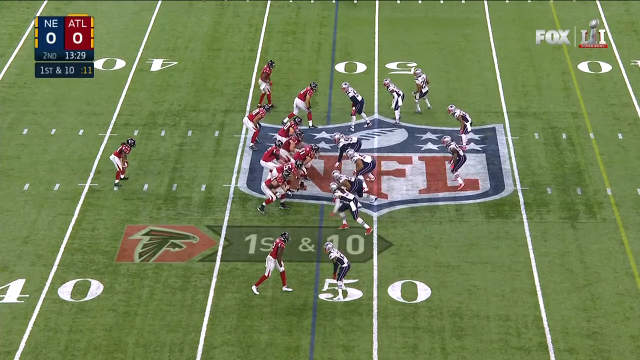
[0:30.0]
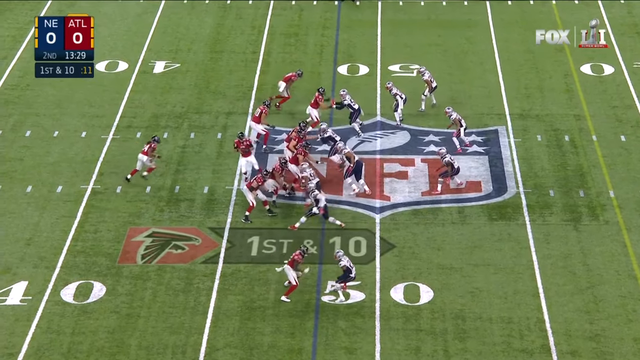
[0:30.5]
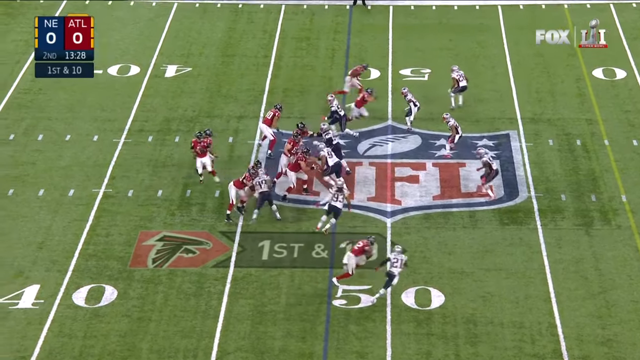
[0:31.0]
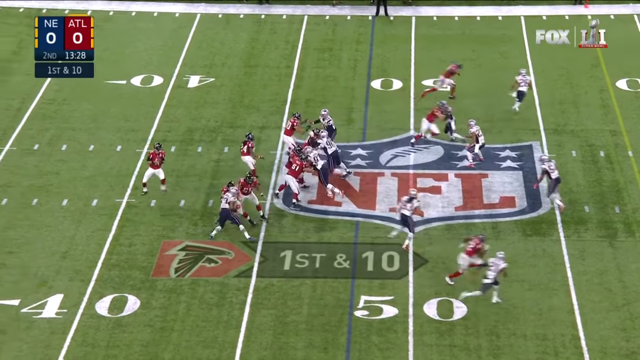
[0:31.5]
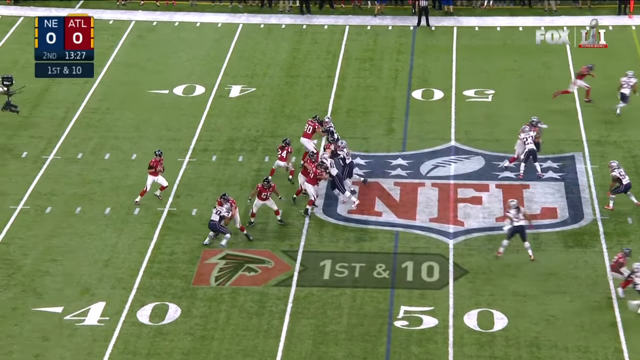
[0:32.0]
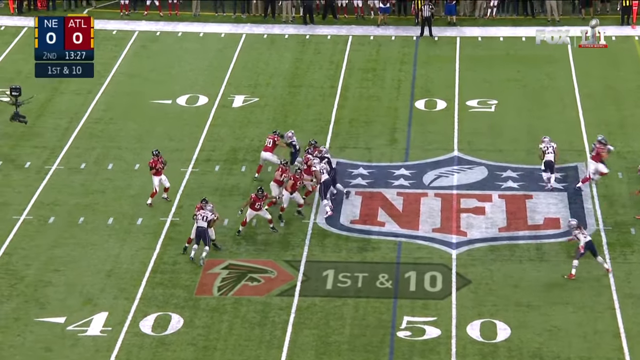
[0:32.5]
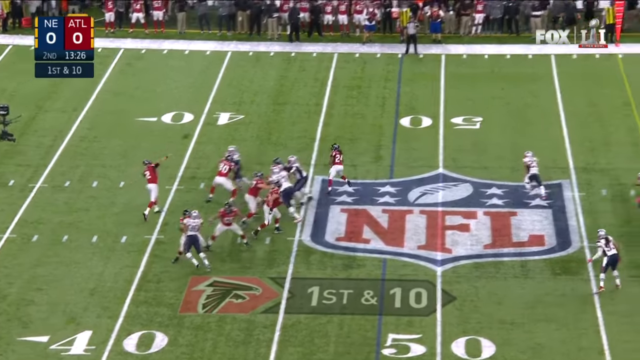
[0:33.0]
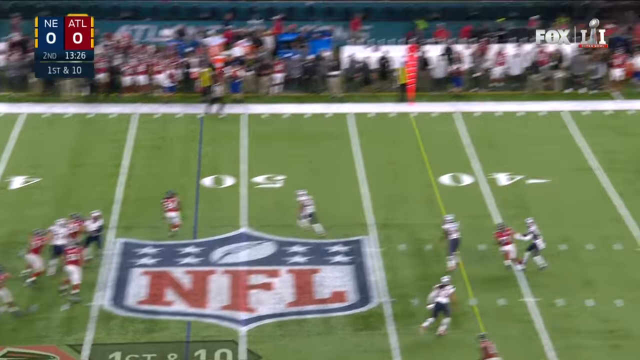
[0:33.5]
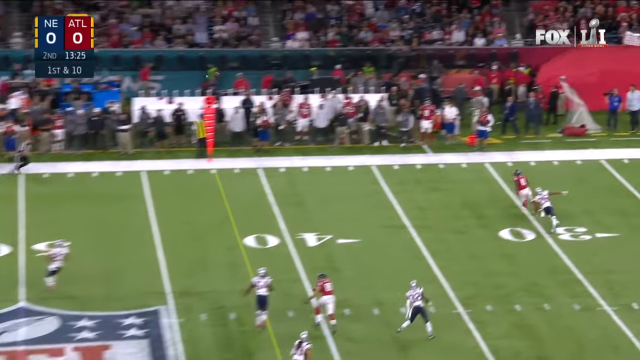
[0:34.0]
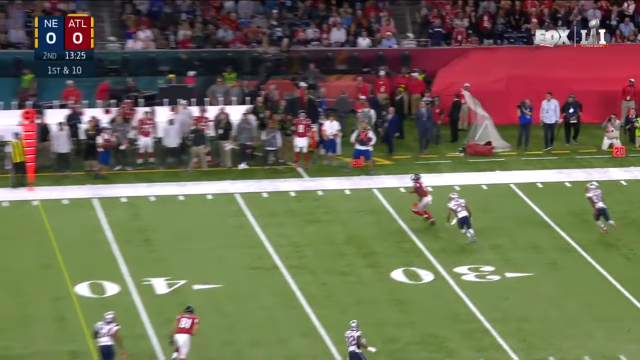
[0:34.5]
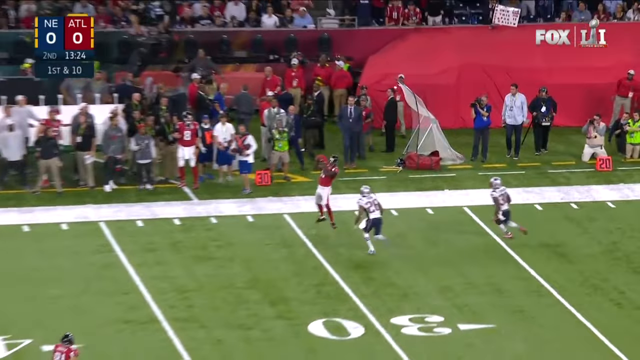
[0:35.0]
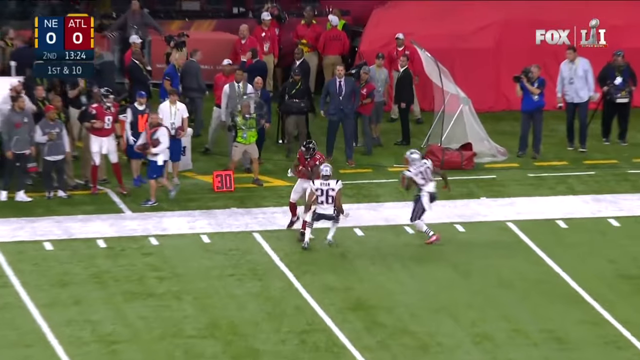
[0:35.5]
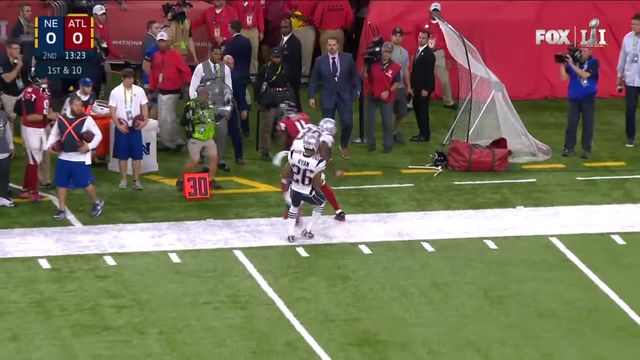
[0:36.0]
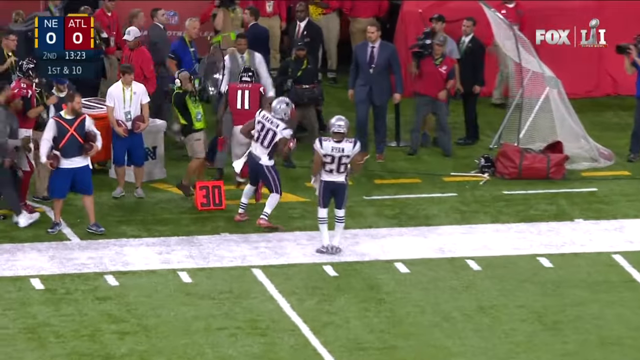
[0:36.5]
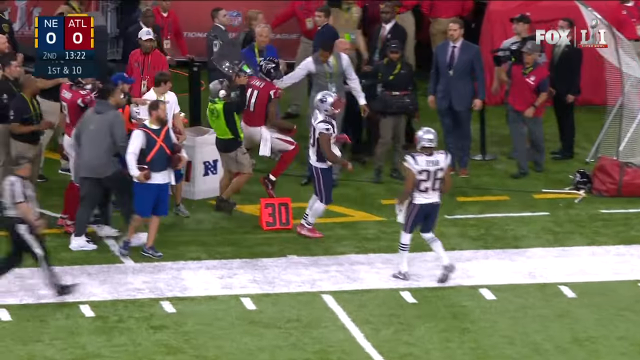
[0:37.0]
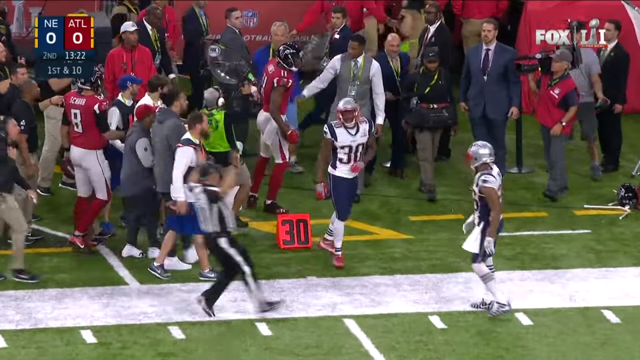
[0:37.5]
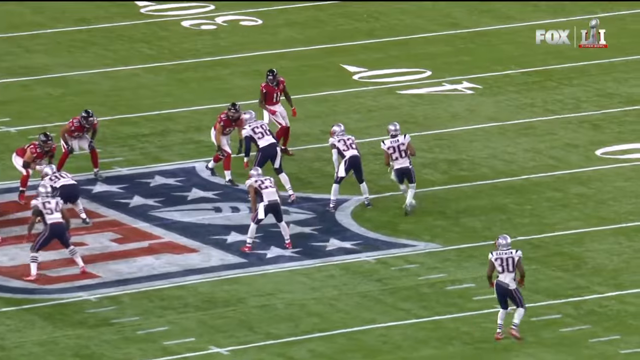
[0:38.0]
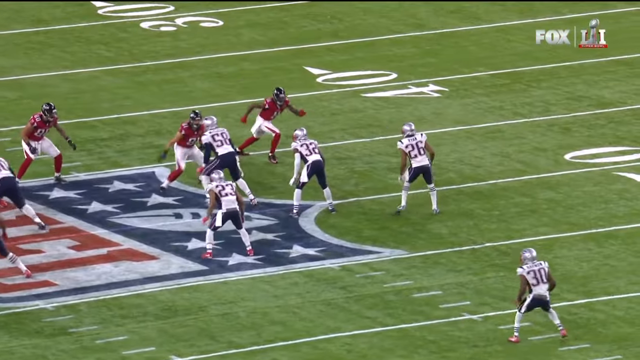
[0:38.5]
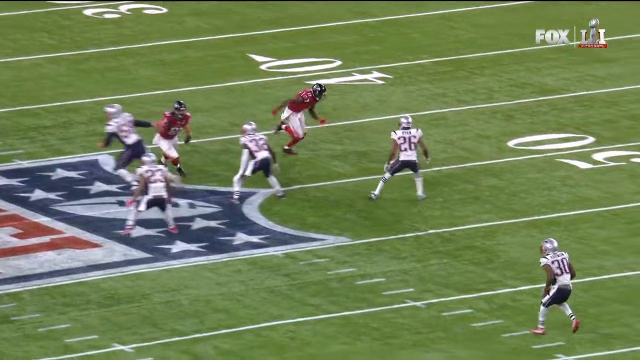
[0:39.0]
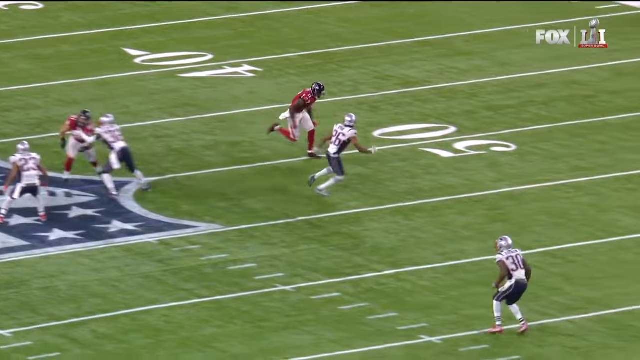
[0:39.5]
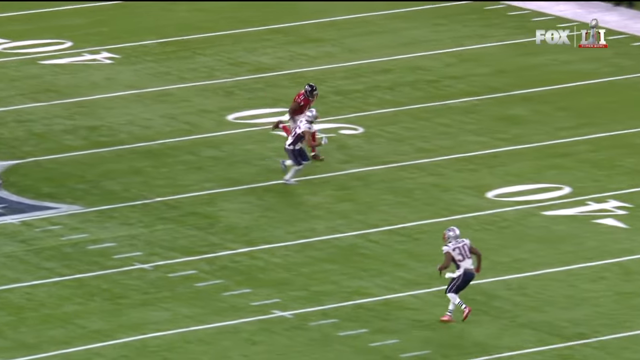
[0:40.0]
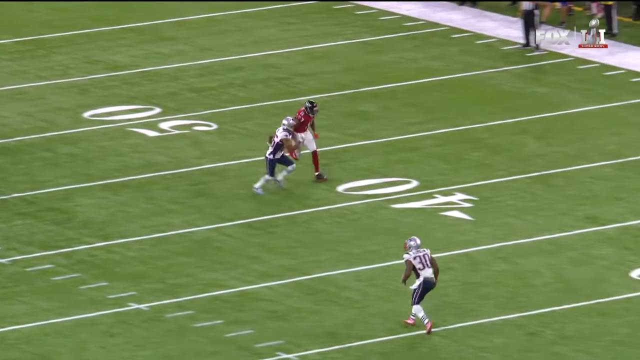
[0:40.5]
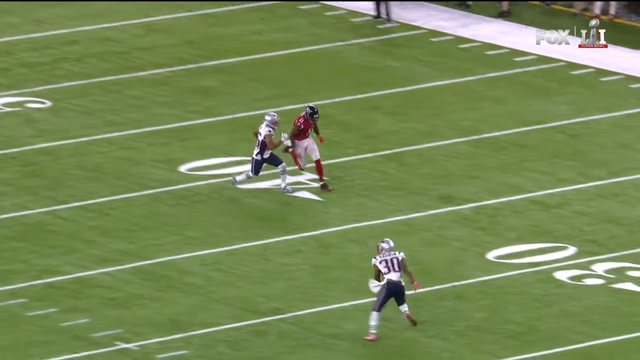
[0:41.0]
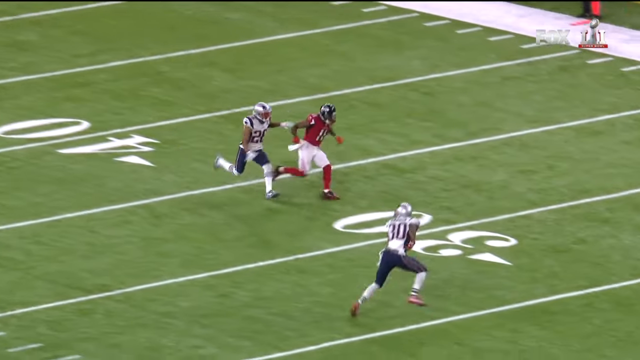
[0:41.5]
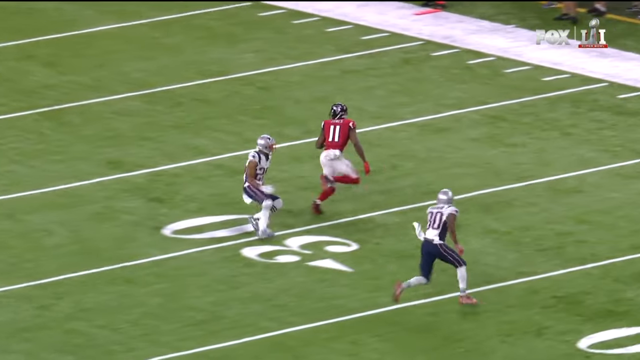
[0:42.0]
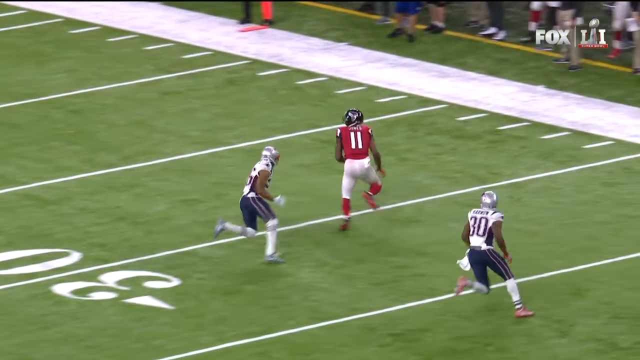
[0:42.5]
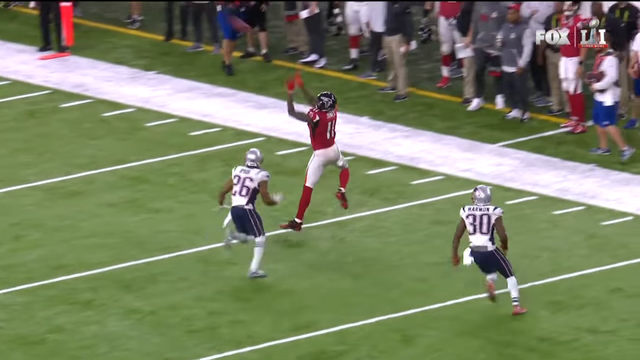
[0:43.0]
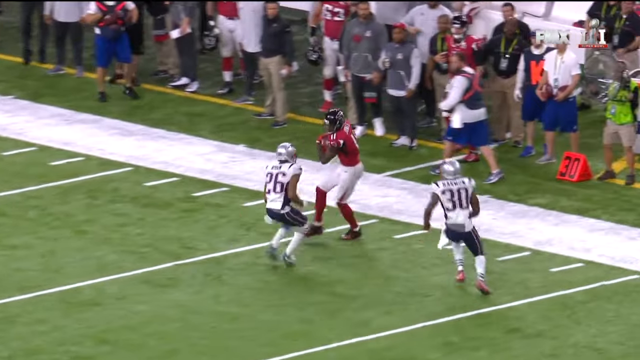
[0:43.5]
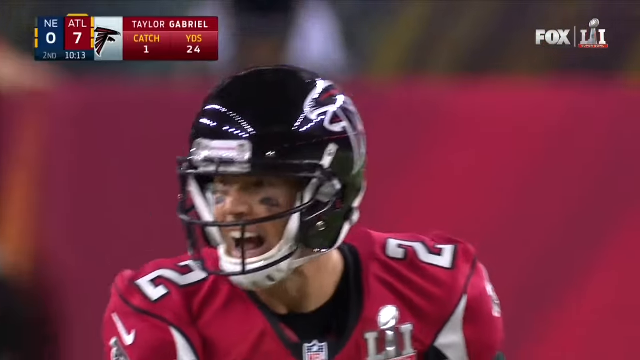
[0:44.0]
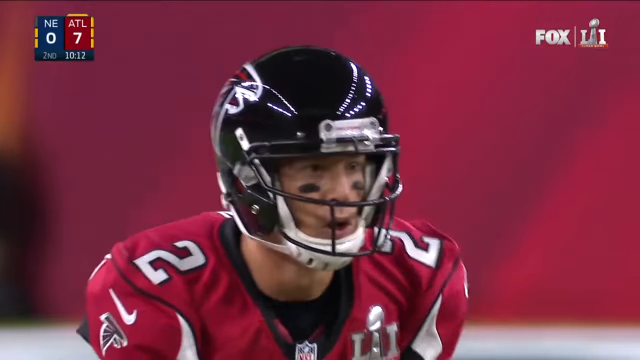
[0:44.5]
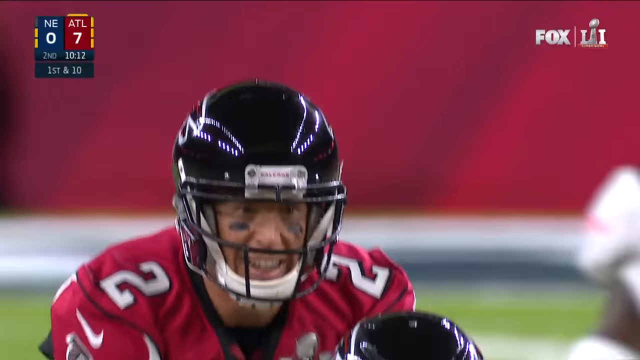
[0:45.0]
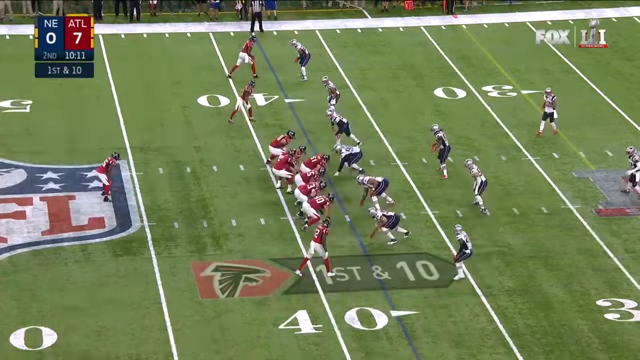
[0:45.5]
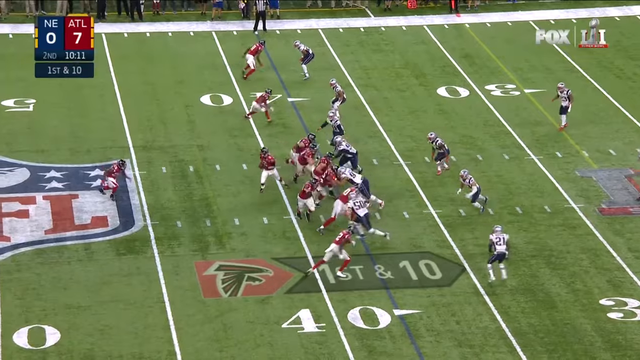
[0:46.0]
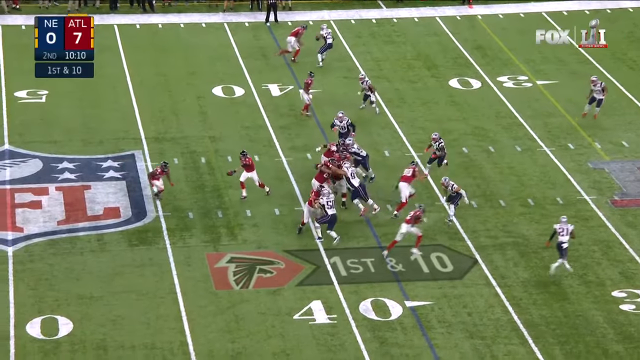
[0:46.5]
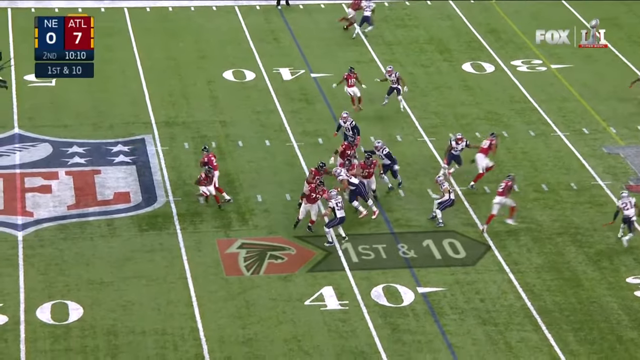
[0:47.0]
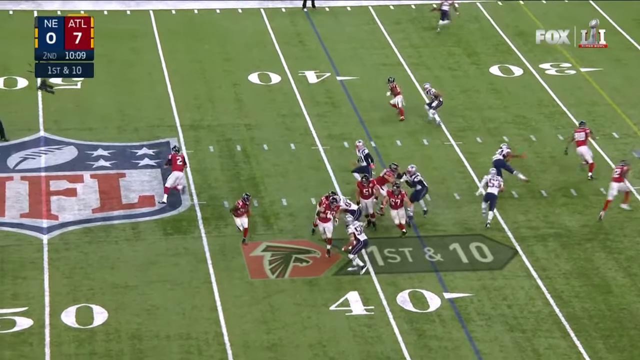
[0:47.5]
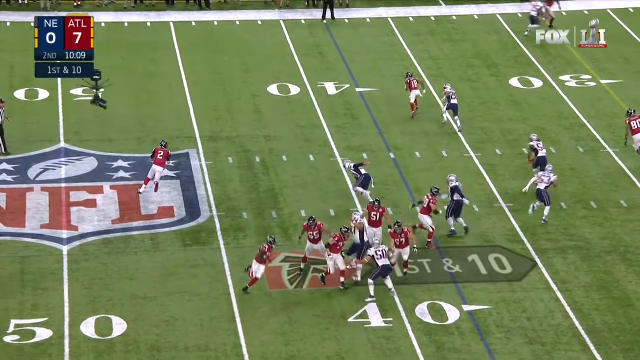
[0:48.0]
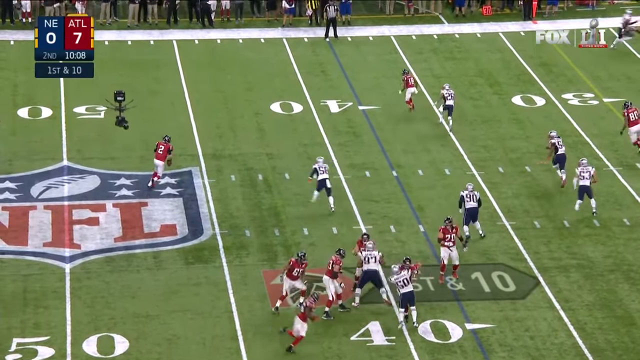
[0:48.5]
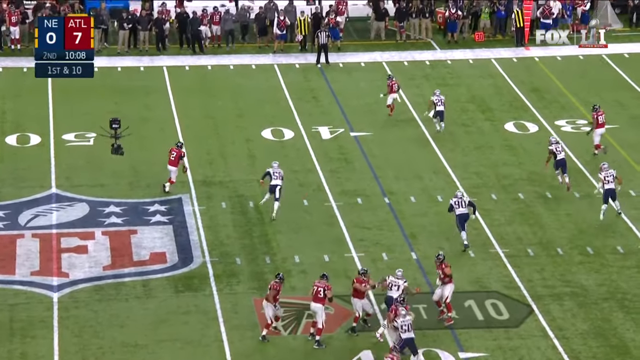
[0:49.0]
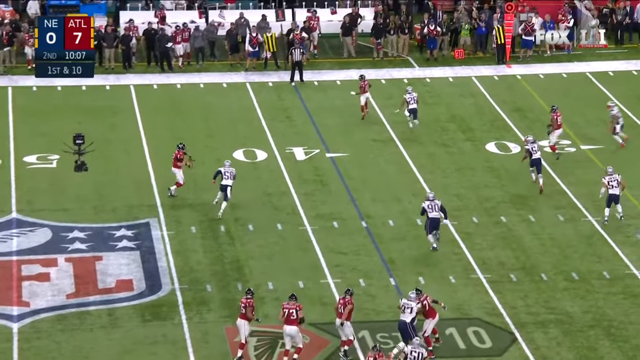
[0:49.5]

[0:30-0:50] Atlanta Falcons quarterback Matt Ryan takes a few steps backward as his receivers run their routes, ending up about 10 steps back, all the way behind the 40-yard line, and looks downfield. There is no pressure around him, as the Falcons offensive line blocks the New England defensive line very well. Matt Ryan throws the ball down the field to Julio Jones, number 11, who makes a corner catch right before the sideline past the 30-yard line, and a Patriots player knocks him out of bounds. A replay shows Julio running the route and turning to the right; number 26 on the Patriots loses his footing a little, and Julio turns around, makes the catch facing backwards, and takes two steps before going out of bounds. Next, a very zoomed-in Matt Ryan is shown yelling. Text above reads "Atlanta 7, New England 0," with "Taylor Gabriel" to the right, "catch" and "yards" in orange text, and below it "one catch for 24 yards." There are 10 minutes and 13 seconds to go in the second quarter. Matt Ryan continues to yell, and the angle changes back to the side view looking down on the field. Matt Ryan fakes giving the ball to the cornerback, then boots out to his left and keeps running to his left as his wide receivers run their routes, and he throws the ball.